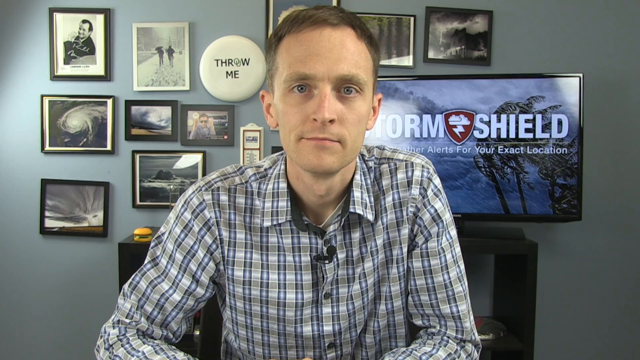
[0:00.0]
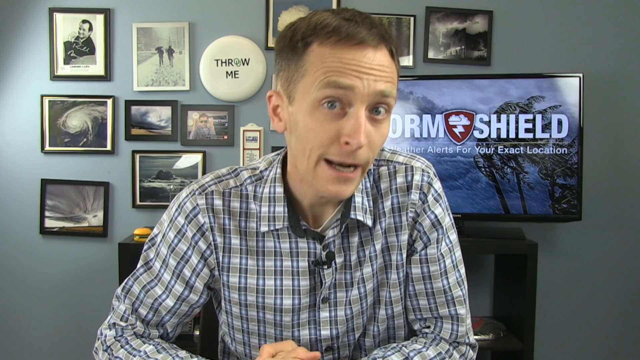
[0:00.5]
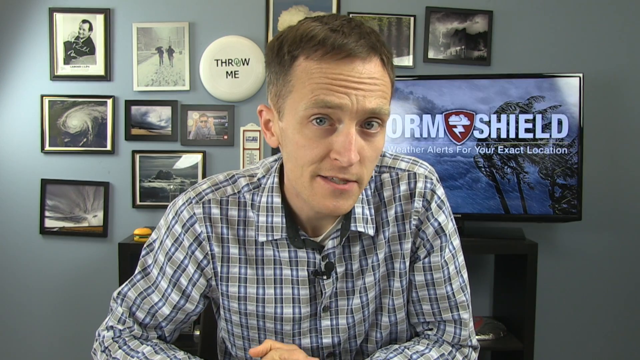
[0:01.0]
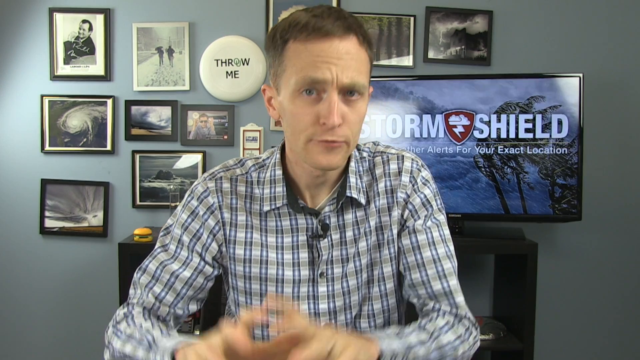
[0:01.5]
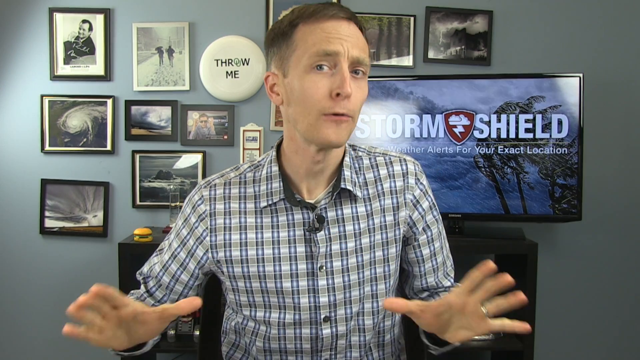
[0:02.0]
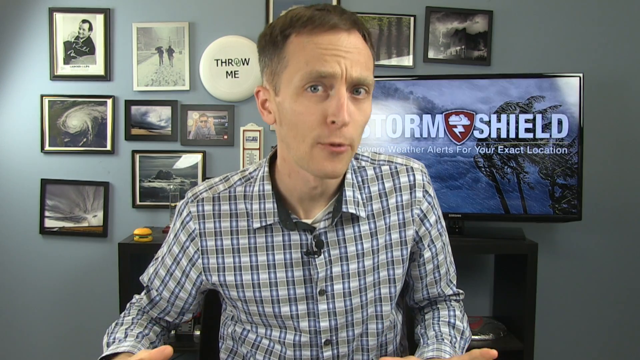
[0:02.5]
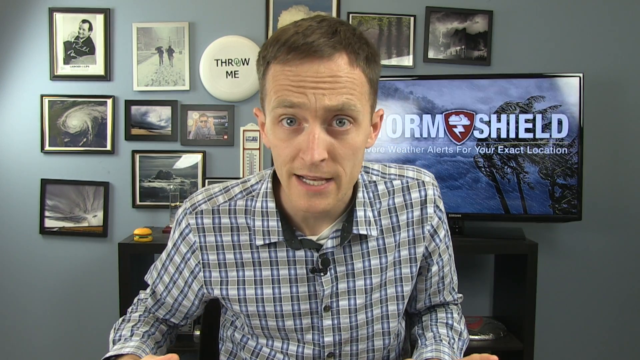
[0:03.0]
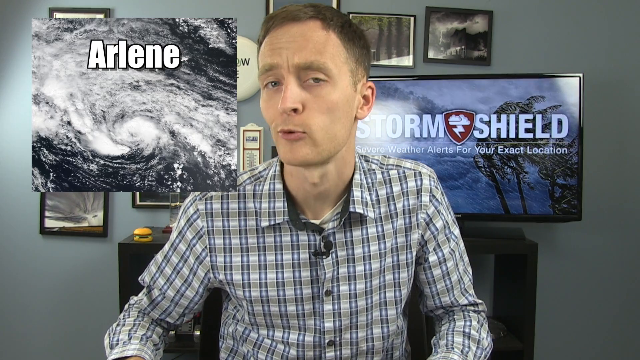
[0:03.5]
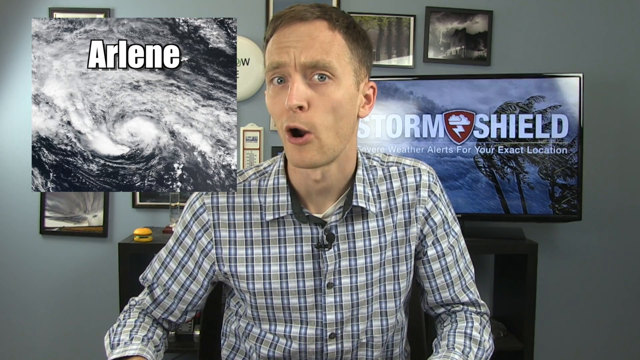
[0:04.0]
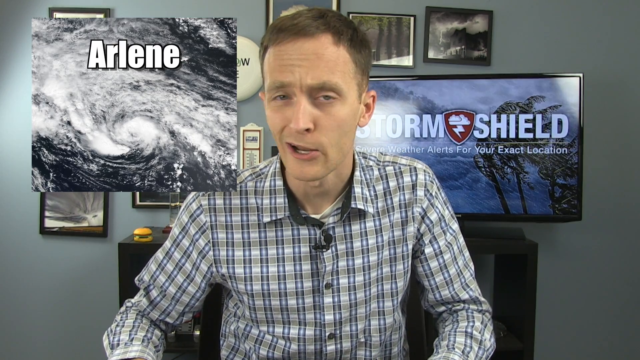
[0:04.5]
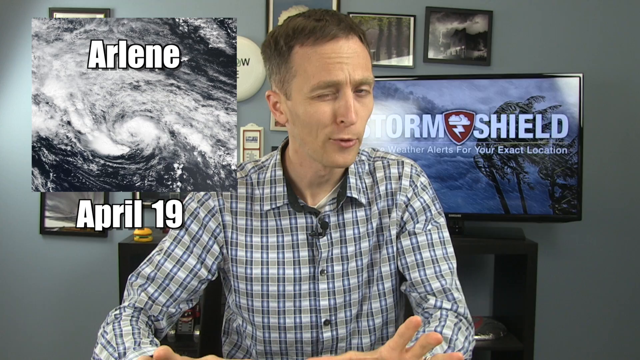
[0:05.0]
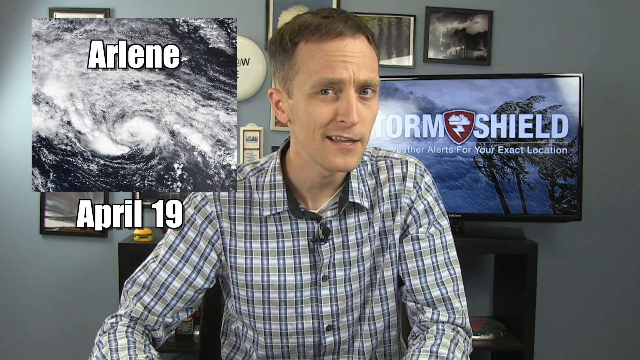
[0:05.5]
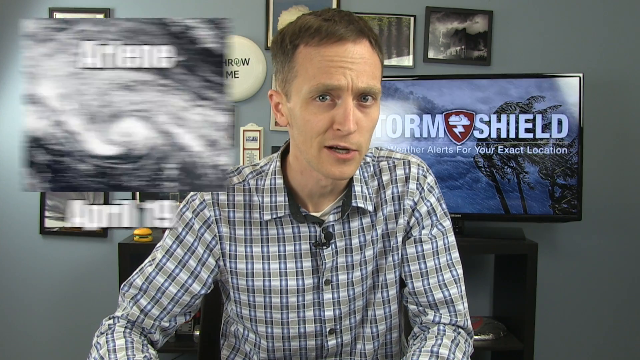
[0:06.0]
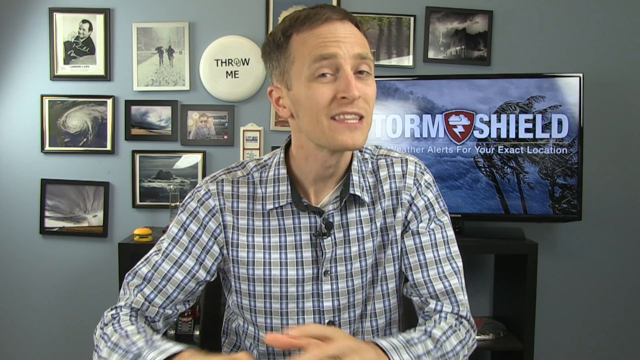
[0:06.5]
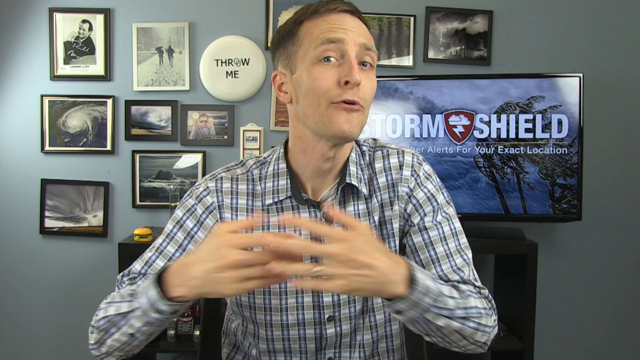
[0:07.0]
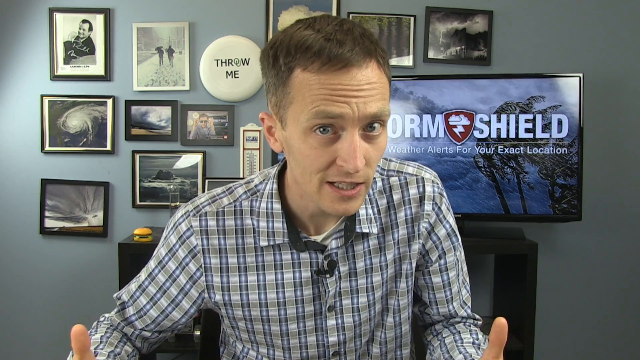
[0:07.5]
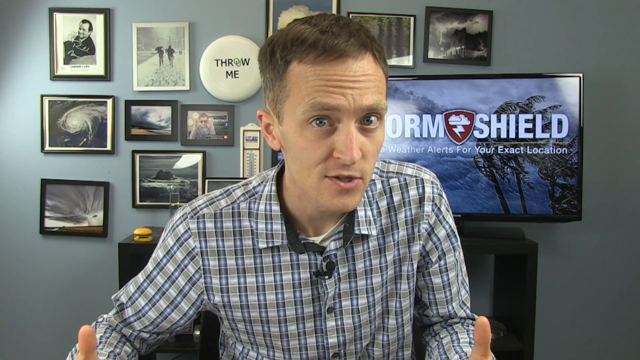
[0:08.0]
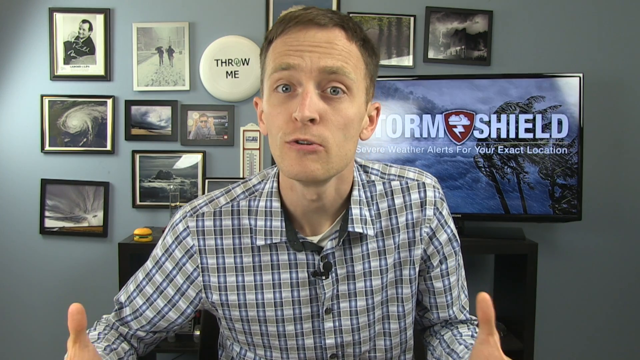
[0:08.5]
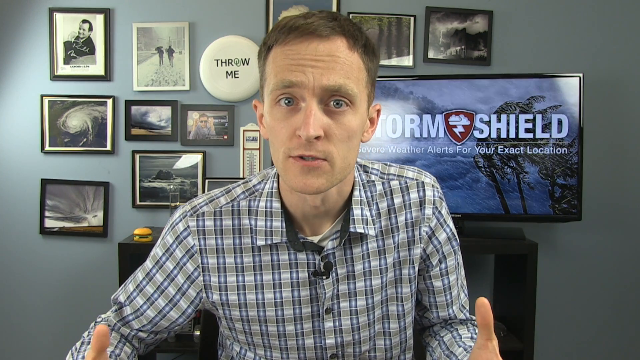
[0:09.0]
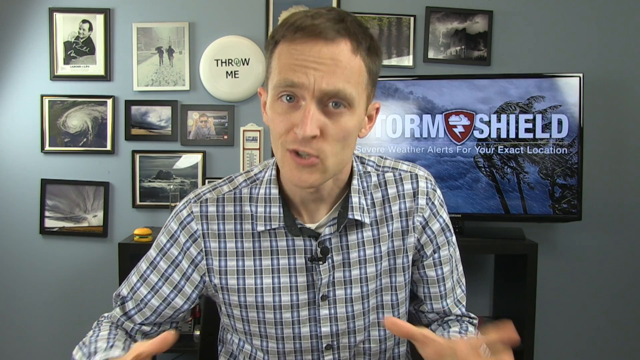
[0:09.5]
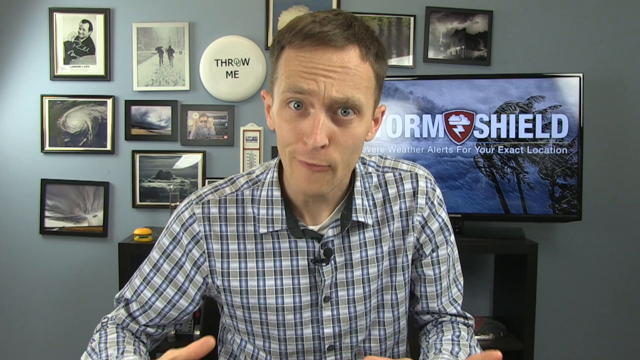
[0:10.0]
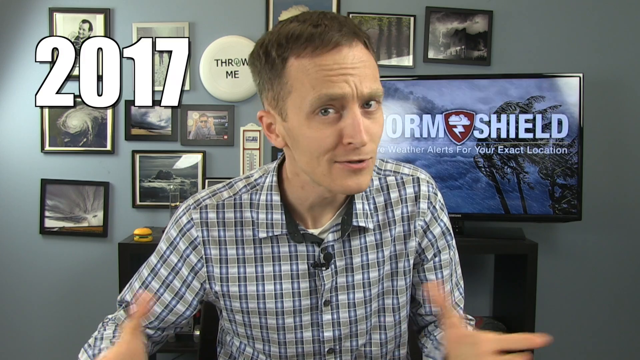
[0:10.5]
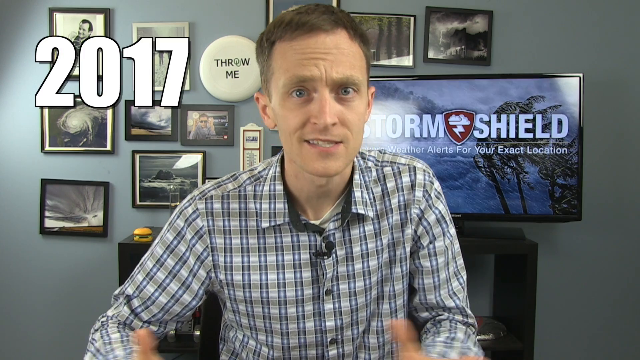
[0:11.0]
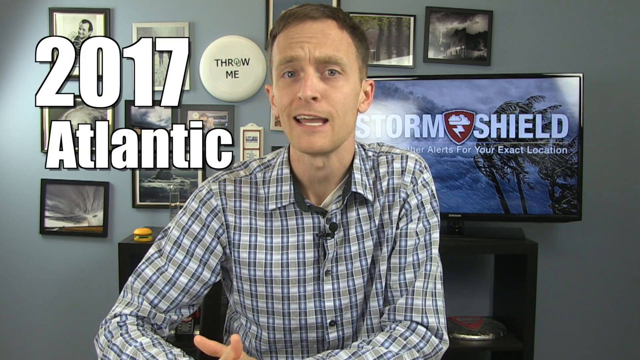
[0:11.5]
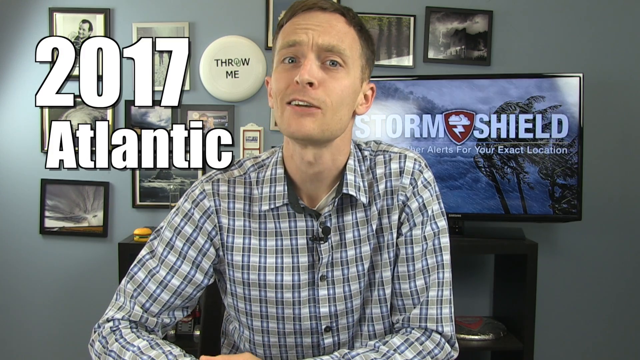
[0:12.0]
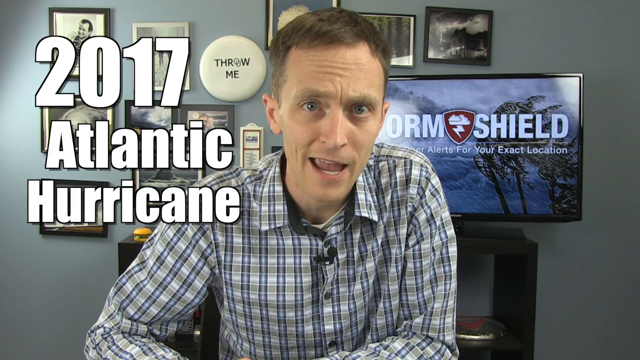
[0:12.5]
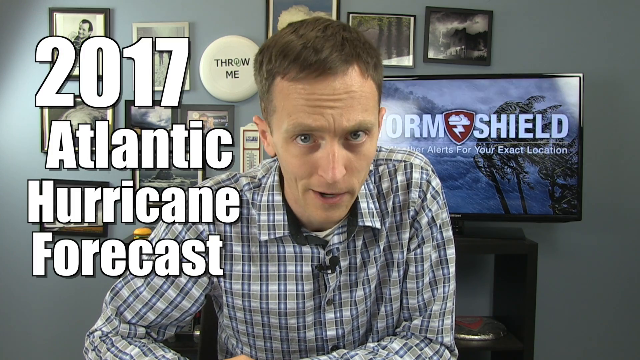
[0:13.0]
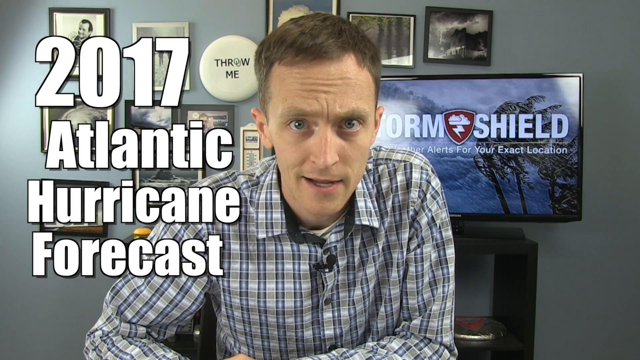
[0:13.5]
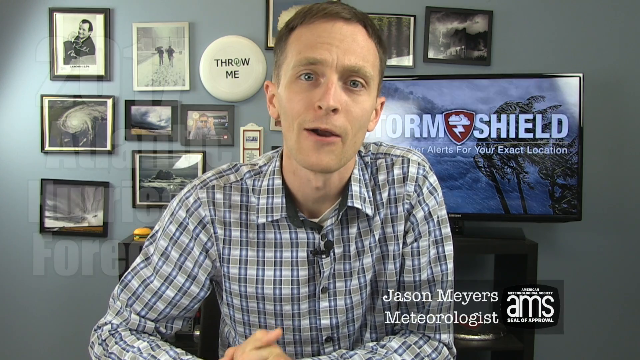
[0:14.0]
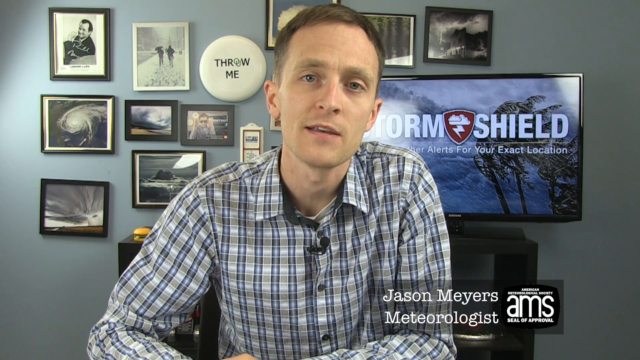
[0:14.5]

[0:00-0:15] The video is titled Hurricane Forecast 2017. A man faces the camera; behind him is a television showing a Storm Shield advertisement, and on the wall behind him are images of various hurricanes and hurricane-related paraphernalia. He talks animatedly with his hands. An image of Arlene pops up in the upper left corner, and then words appear on the left side of the screen. The speaker appears to be a meteorologist, weather person or hurricane specialist. He frequently leans into the camera while speaking and gestures around with his hands. A pop-up in the lower right of the screen identifies him as "Jason Myers Meteorologist."